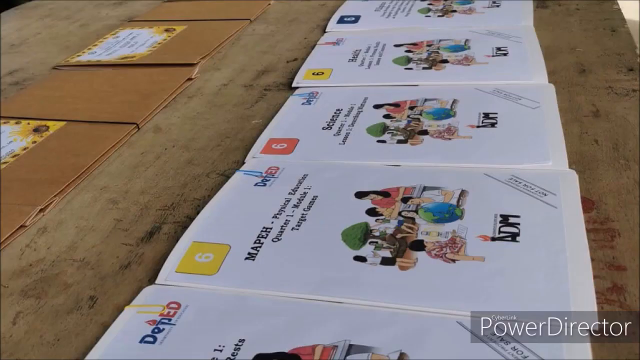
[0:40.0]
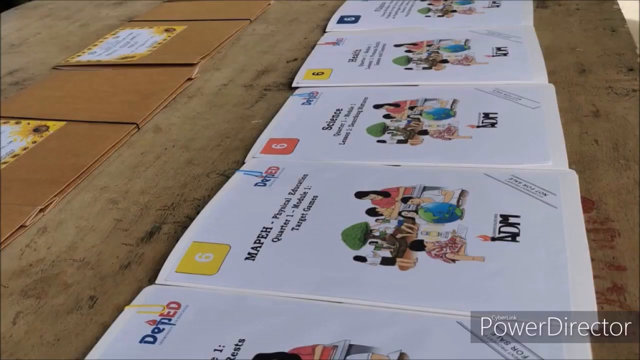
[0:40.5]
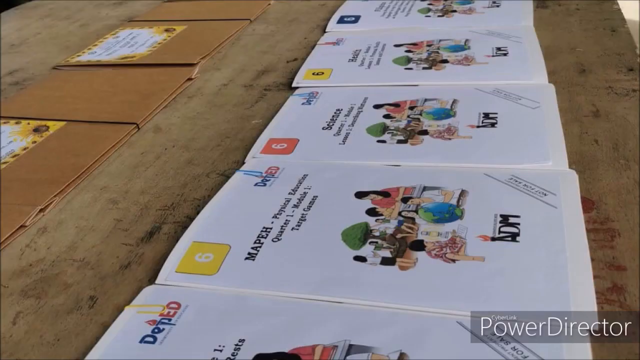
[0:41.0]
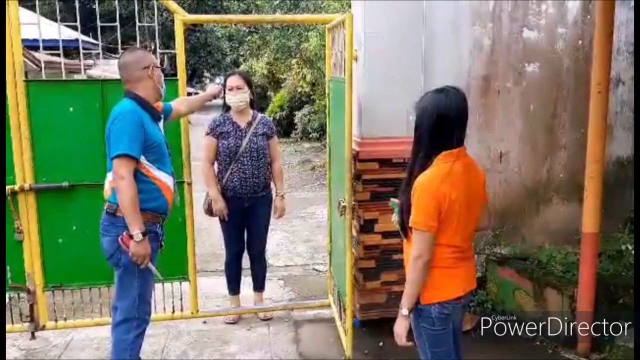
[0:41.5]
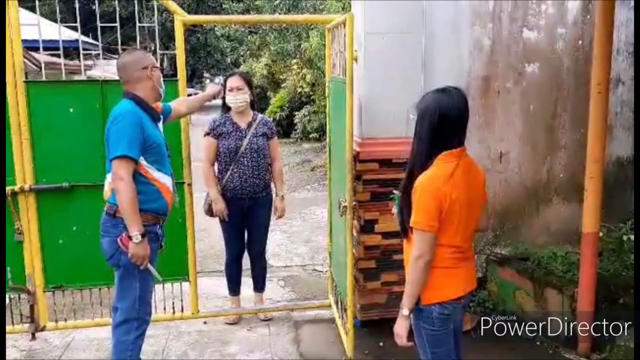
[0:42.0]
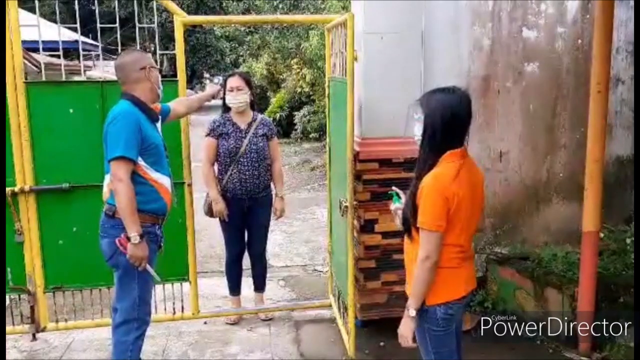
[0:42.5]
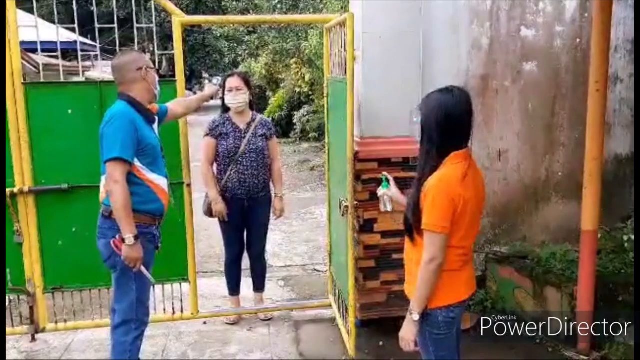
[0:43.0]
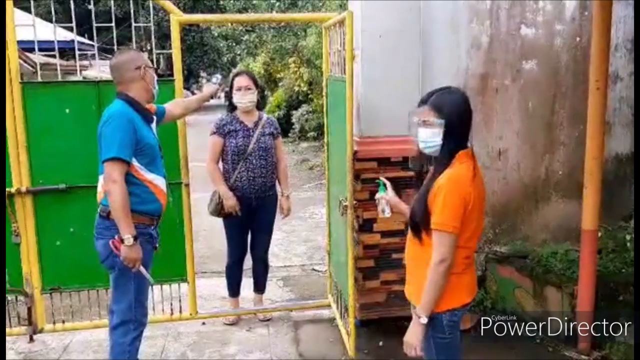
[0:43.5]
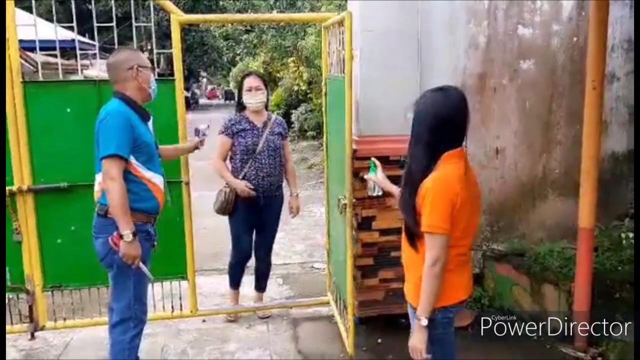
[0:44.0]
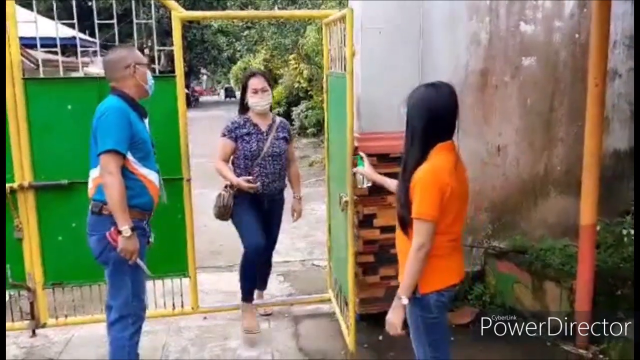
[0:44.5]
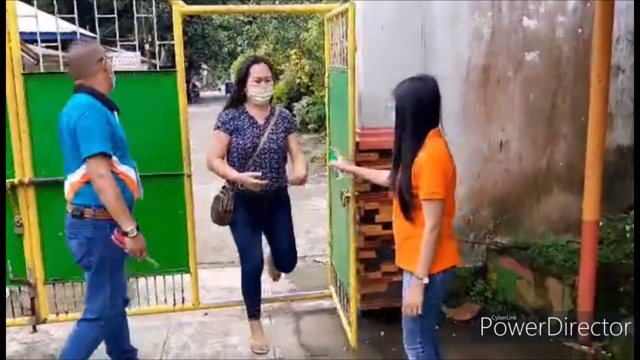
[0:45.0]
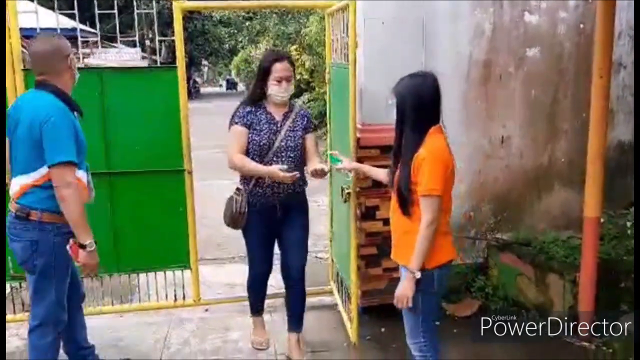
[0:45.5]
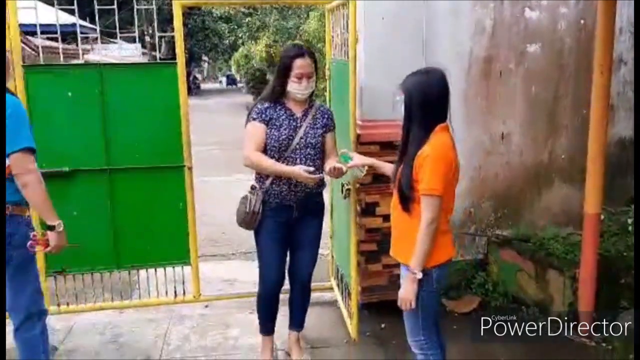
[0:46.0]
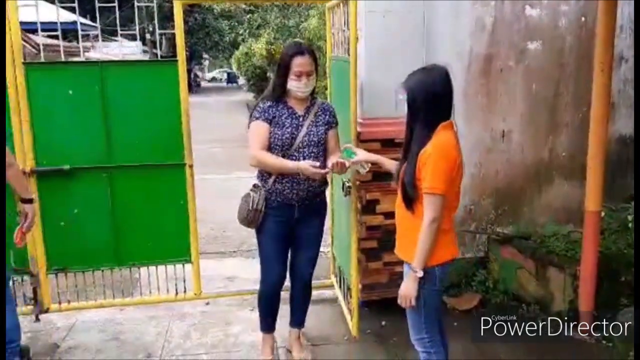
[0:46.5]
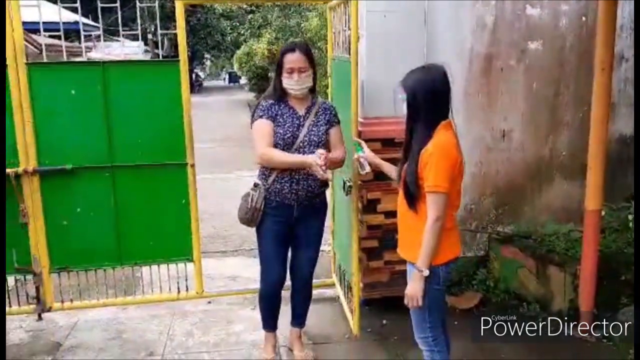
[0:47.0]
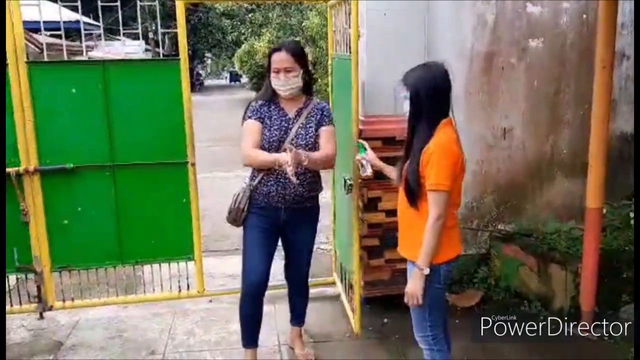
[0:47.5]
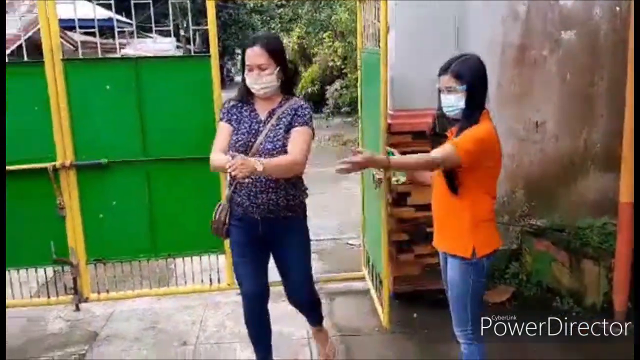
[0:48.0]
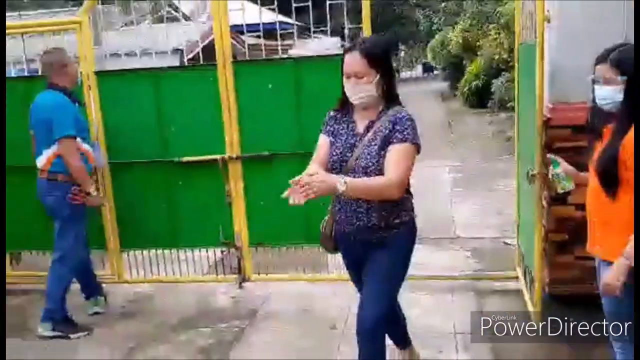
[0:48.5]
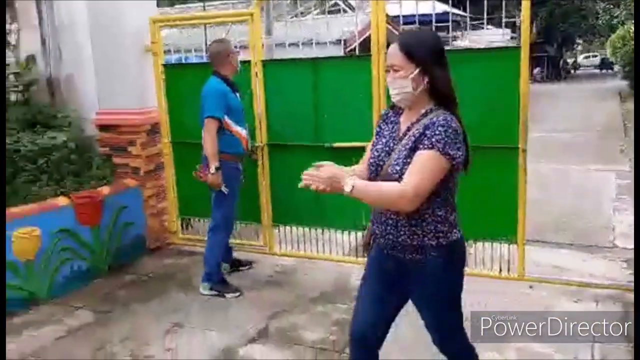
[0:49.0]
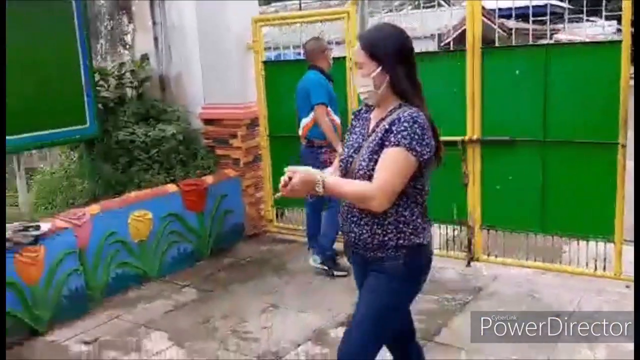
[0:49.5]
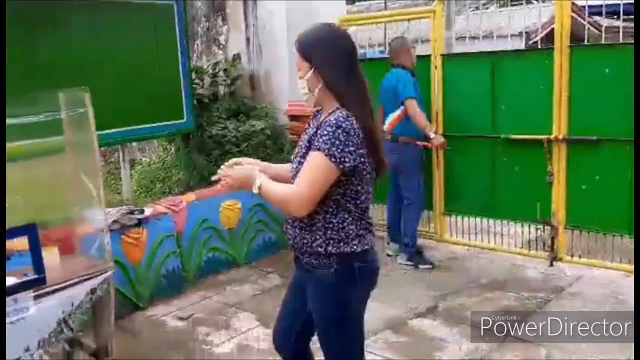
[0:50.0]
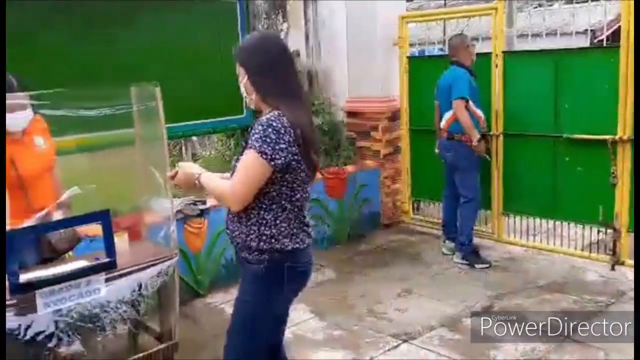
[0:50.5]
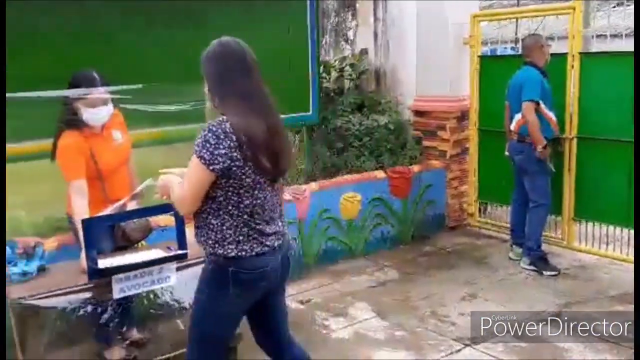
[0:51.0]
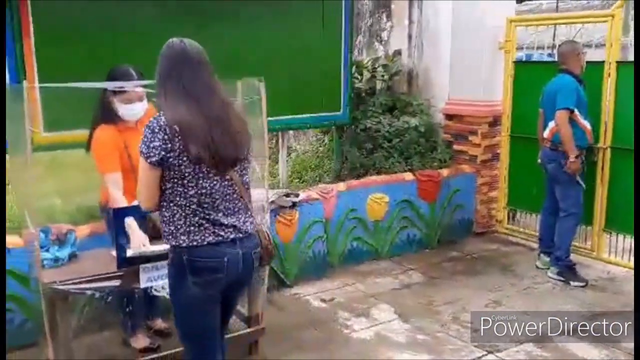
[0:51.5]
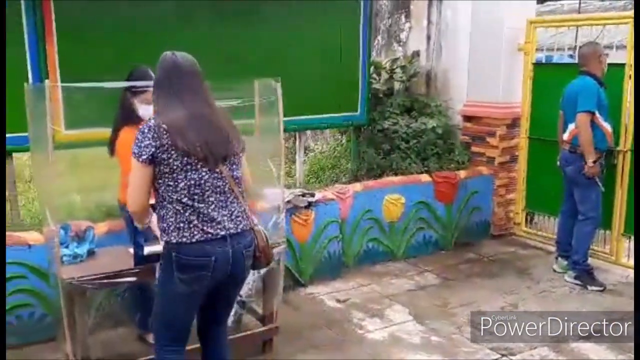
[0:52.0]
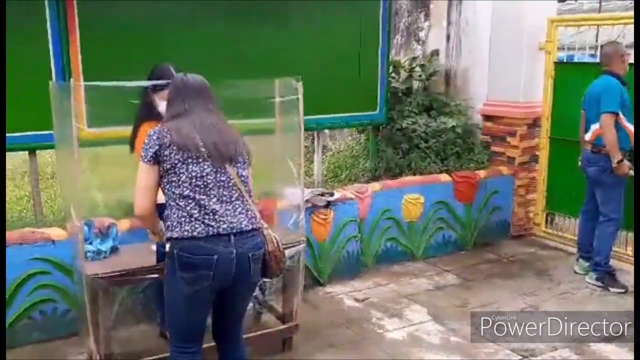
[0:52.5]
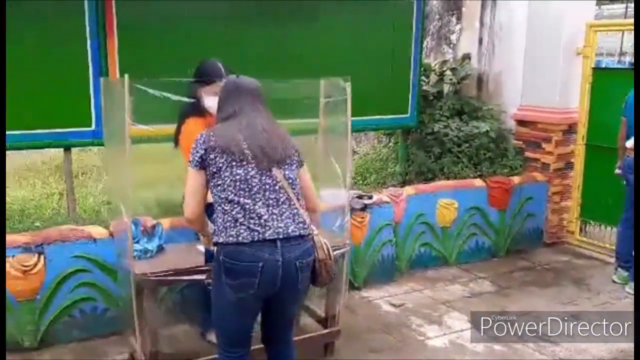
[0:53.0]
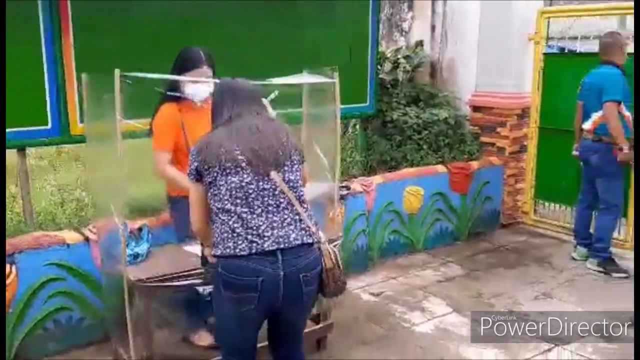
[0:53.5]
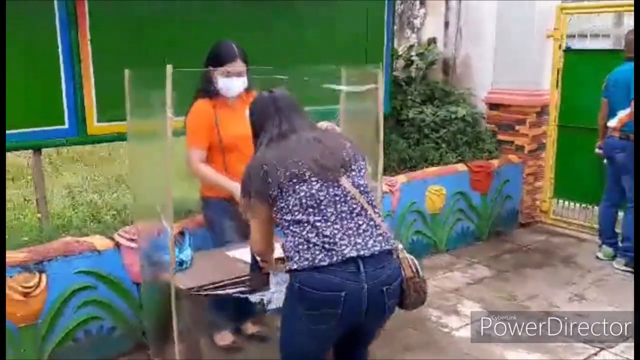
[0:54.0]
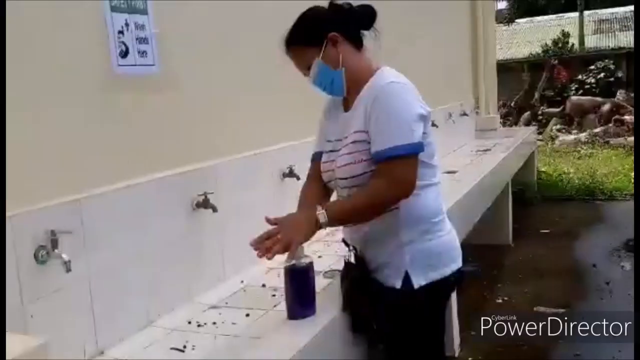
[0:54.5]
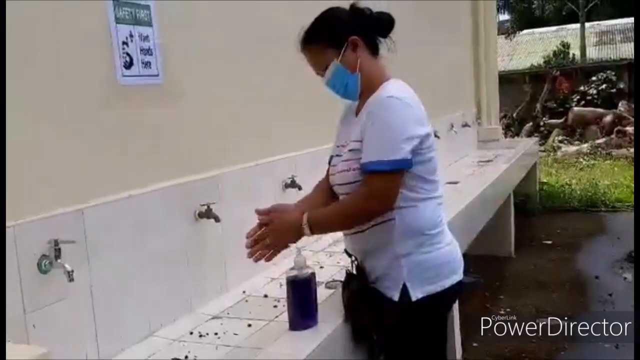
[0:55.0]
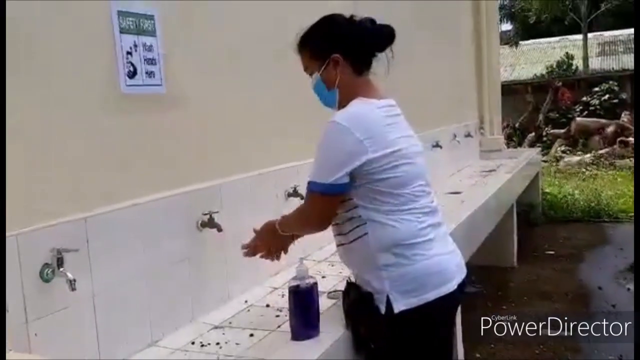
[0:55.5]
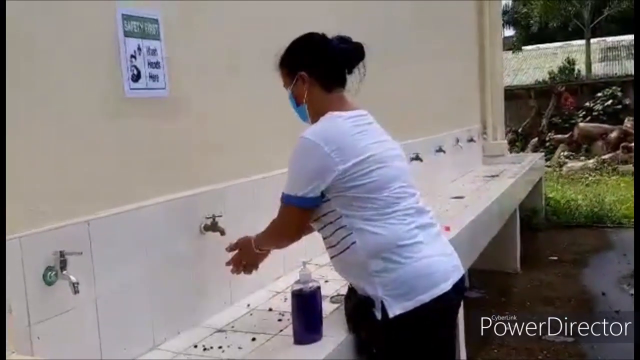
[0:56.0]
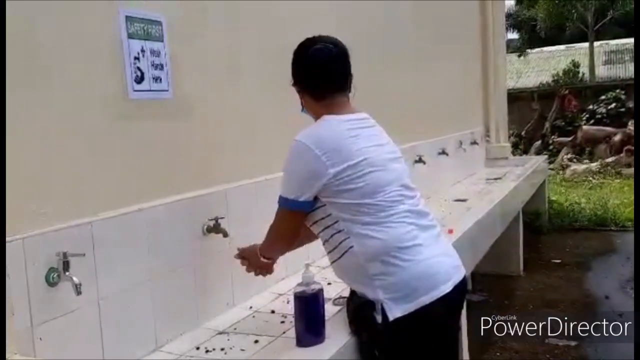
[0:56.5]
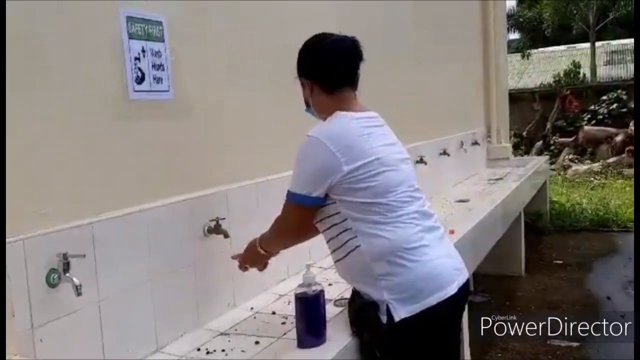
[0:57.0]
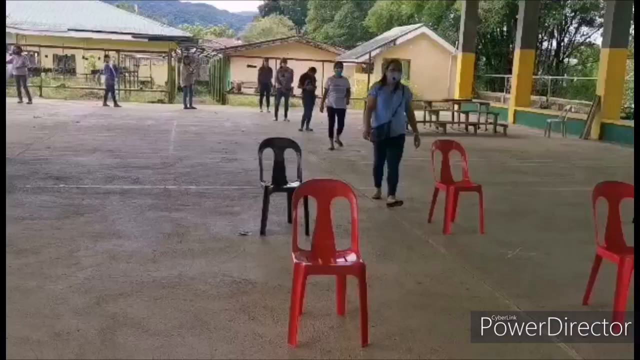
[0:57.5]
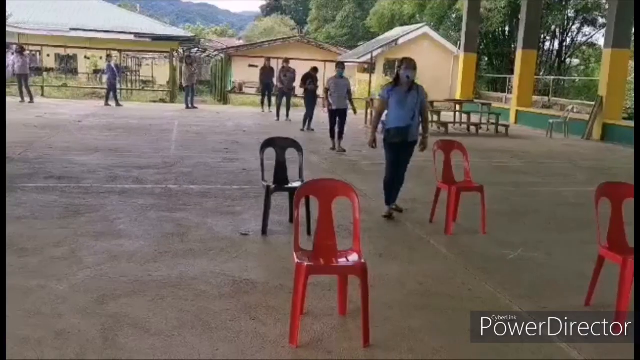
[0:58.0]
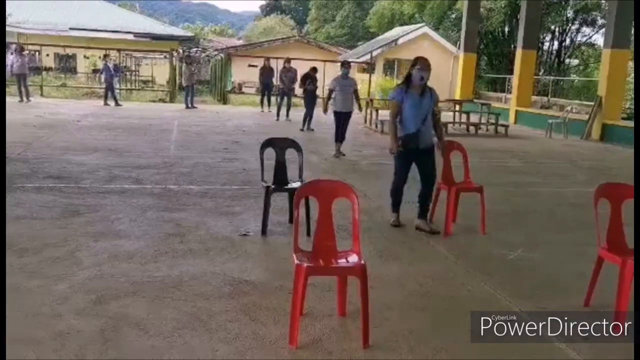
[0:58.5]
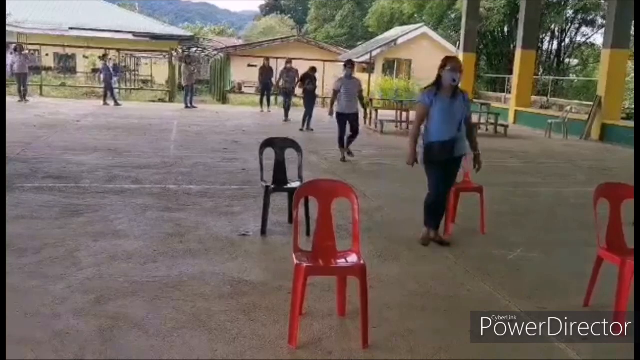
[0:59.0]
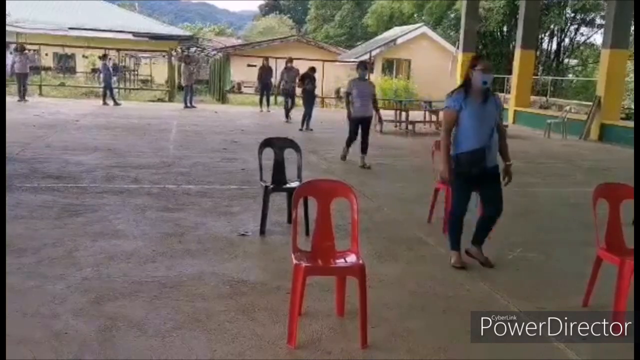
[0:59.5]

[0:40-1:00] The camera shows a row of reading books, apparently a physical education book, a science book and a health book, all with paperclips on them and next to some cardboard. An image then shows a man welcoming a lady in the doorway while a lady in an orange shirt stands by and watches. The lady in the orange shirt offers hand sanitizer to the arriving lady, who rubs it in her hands, and she then walks over to another screen-protected table where another lady in an orange shirt offers some forms. The scene changes to a new lady in a white shirt washing her hands at a long row of sinks. People then come into a socially distanced gathering area with colorful plastic chairs arranged six feet apart from each other; the parent orientation appears to be beginning.